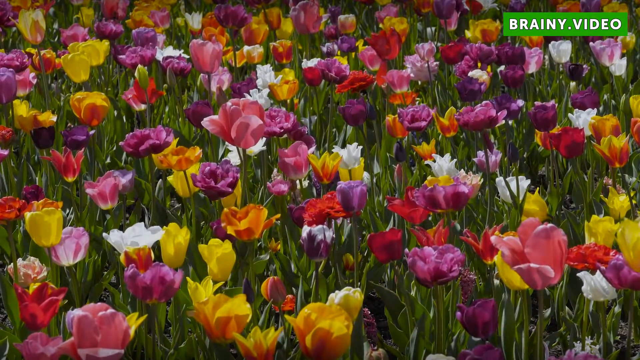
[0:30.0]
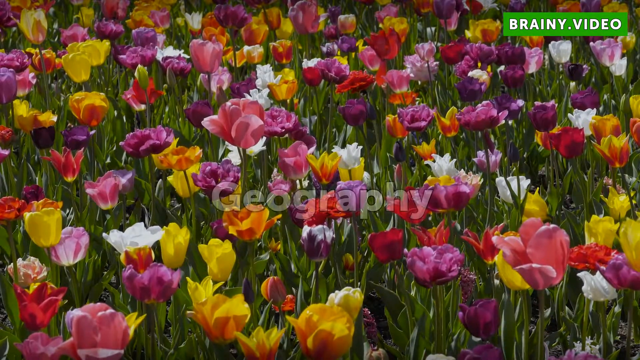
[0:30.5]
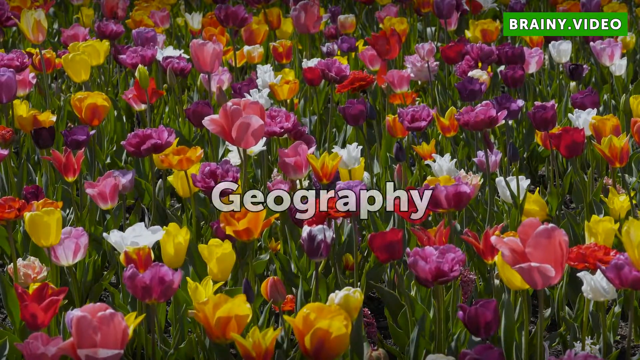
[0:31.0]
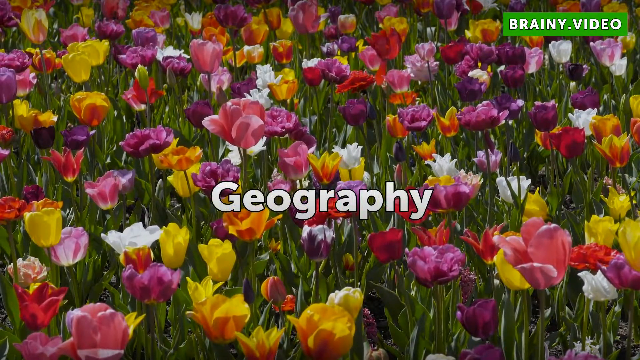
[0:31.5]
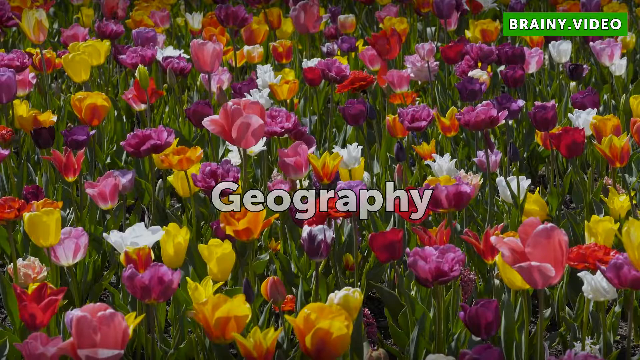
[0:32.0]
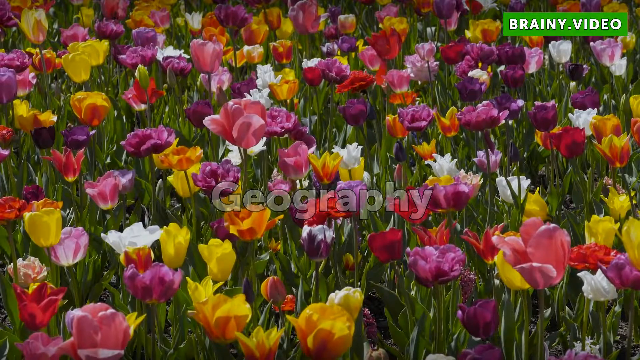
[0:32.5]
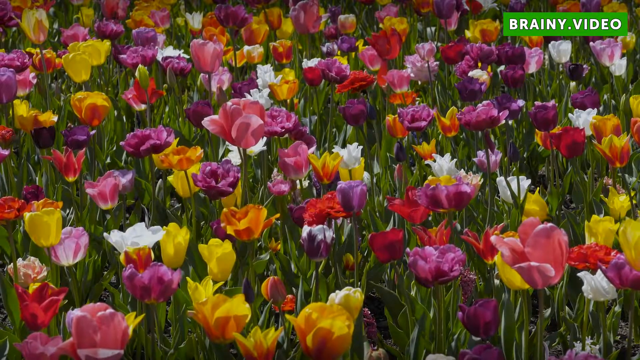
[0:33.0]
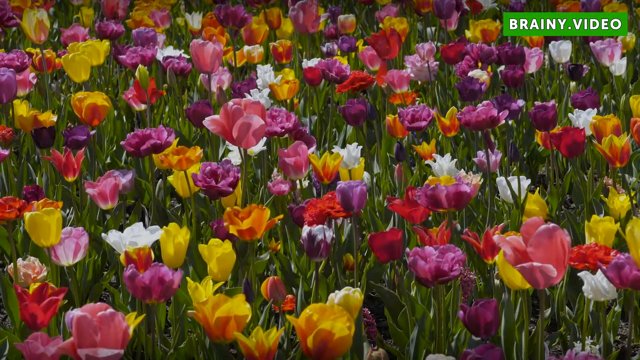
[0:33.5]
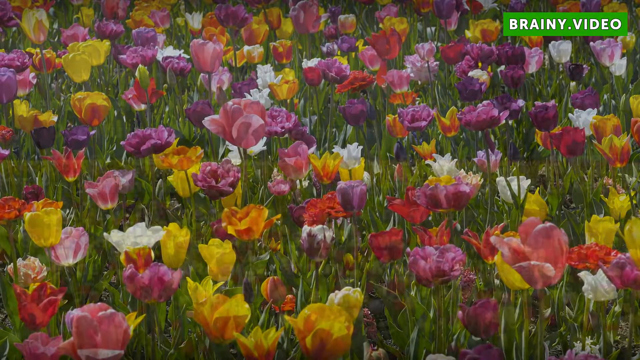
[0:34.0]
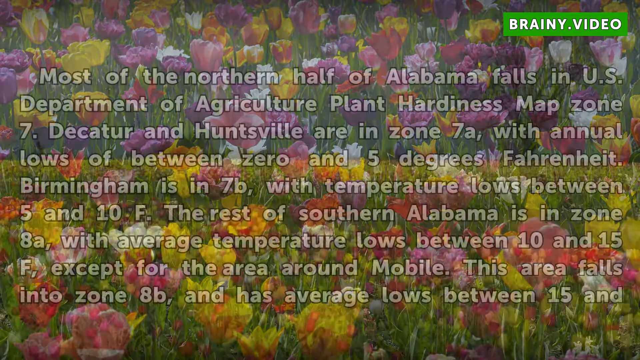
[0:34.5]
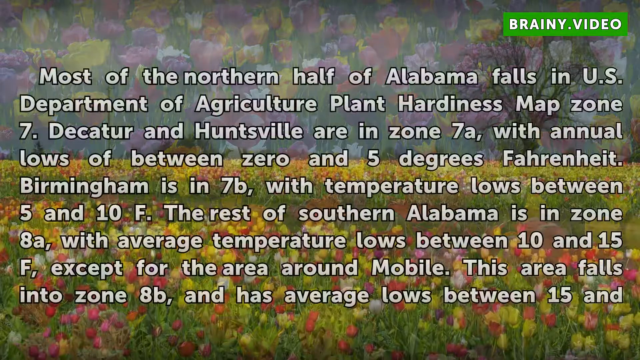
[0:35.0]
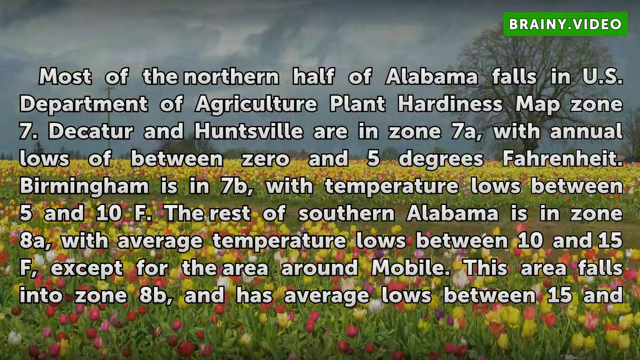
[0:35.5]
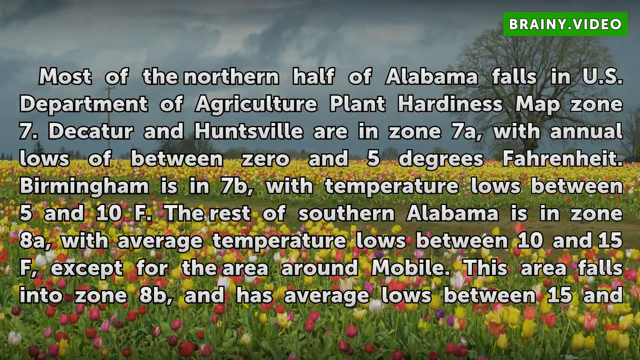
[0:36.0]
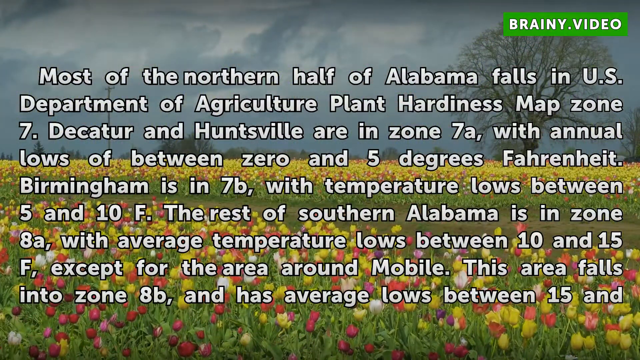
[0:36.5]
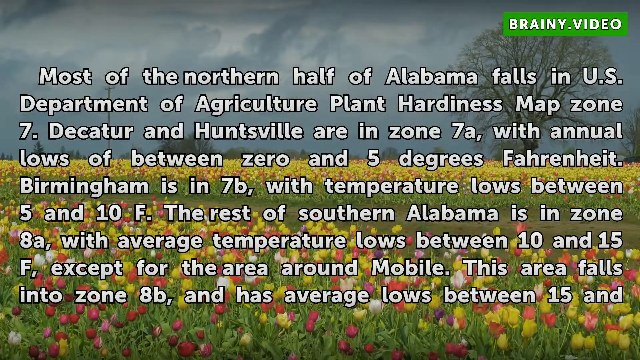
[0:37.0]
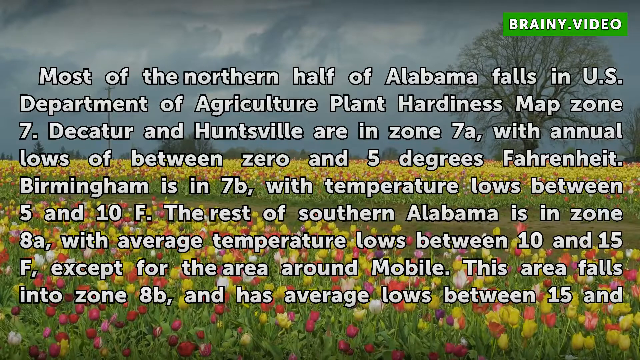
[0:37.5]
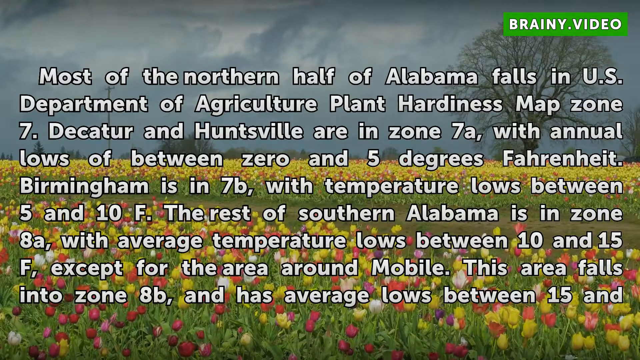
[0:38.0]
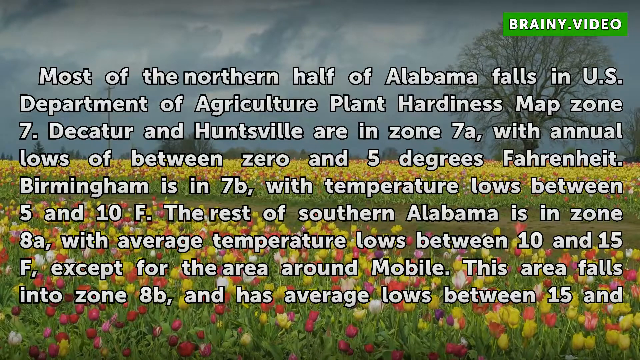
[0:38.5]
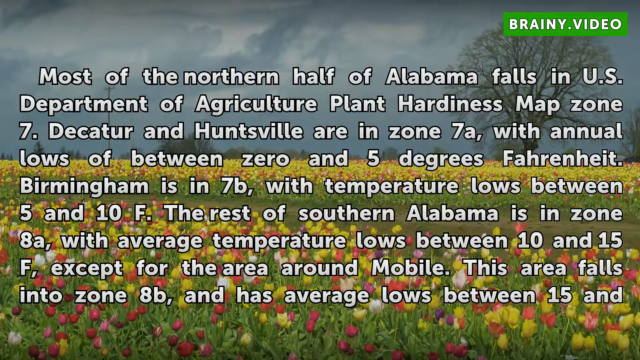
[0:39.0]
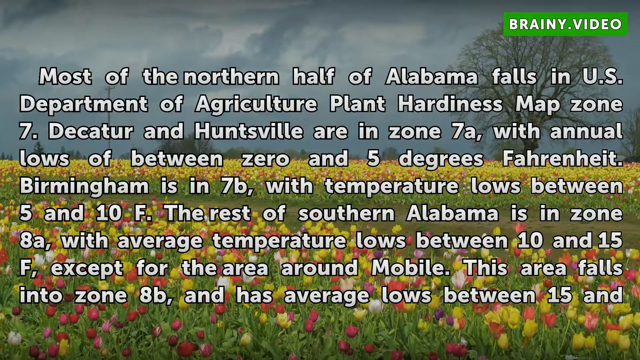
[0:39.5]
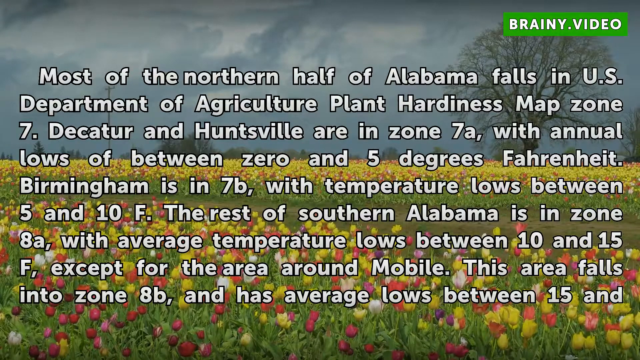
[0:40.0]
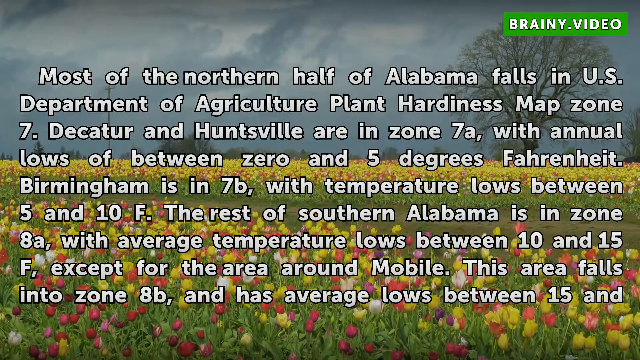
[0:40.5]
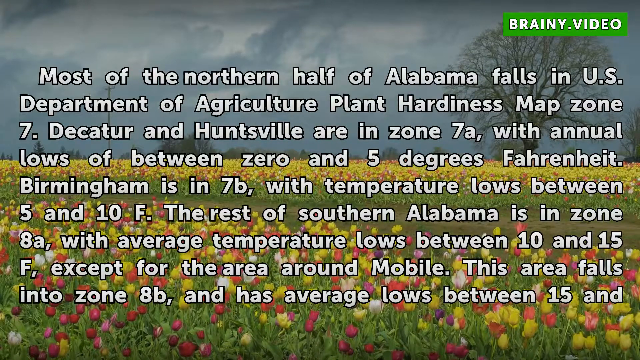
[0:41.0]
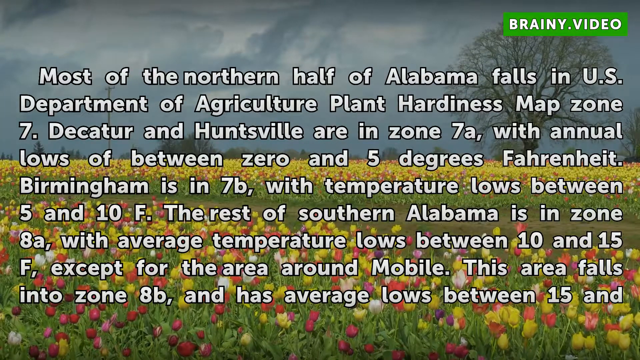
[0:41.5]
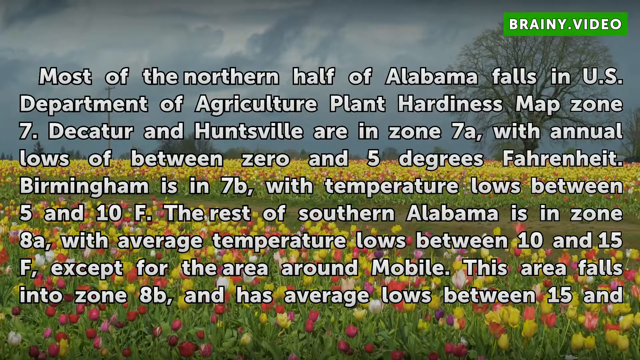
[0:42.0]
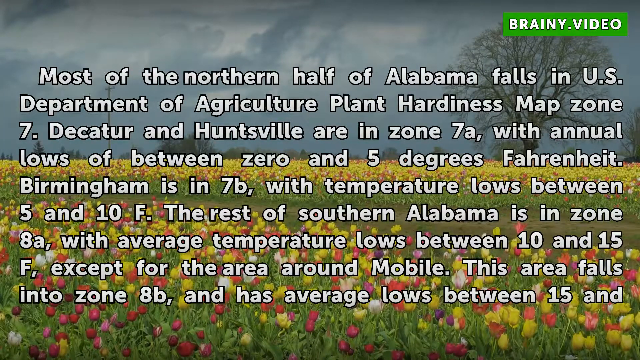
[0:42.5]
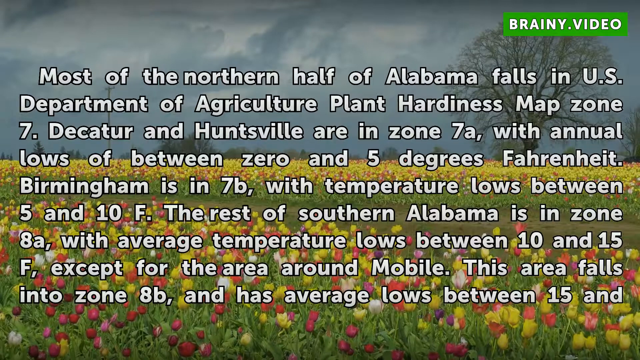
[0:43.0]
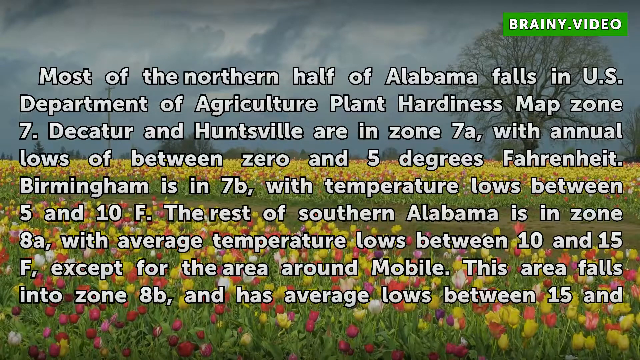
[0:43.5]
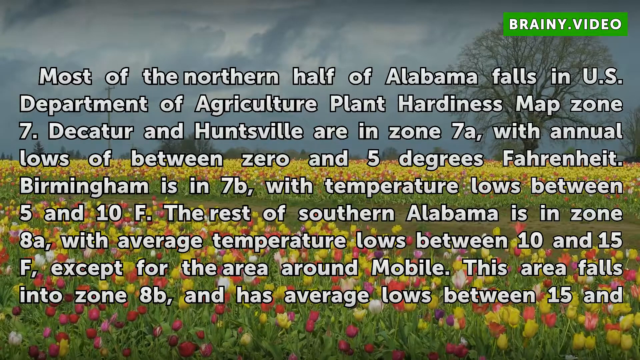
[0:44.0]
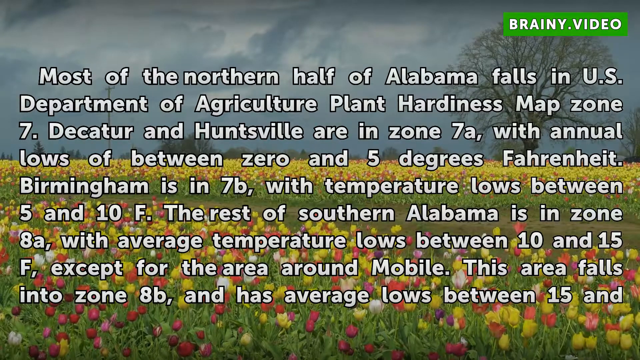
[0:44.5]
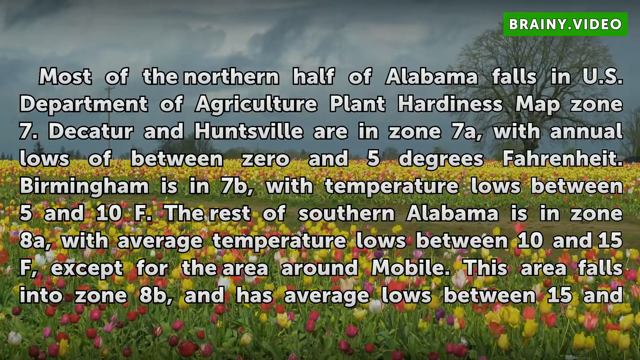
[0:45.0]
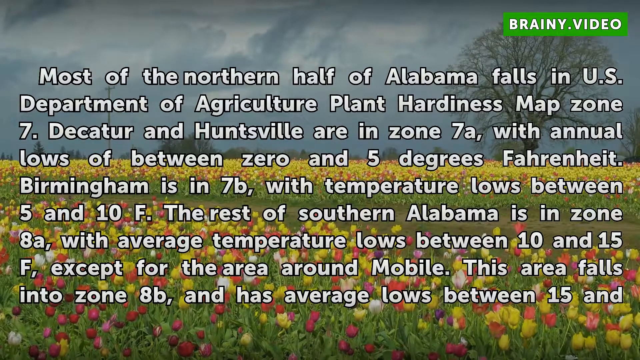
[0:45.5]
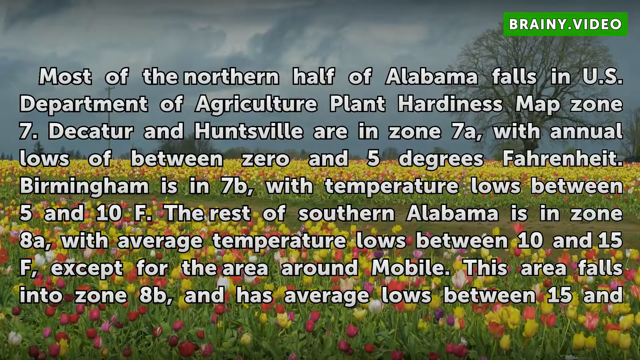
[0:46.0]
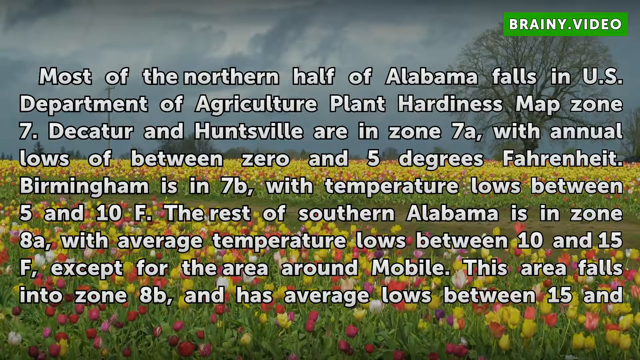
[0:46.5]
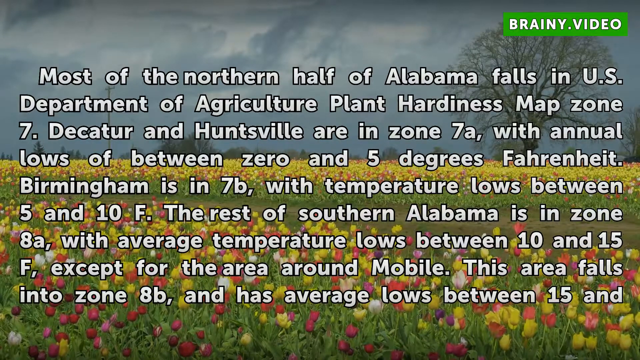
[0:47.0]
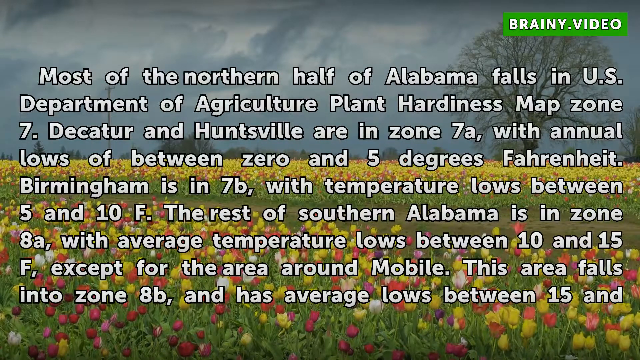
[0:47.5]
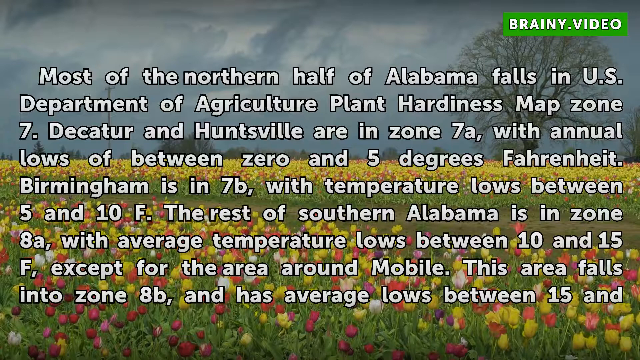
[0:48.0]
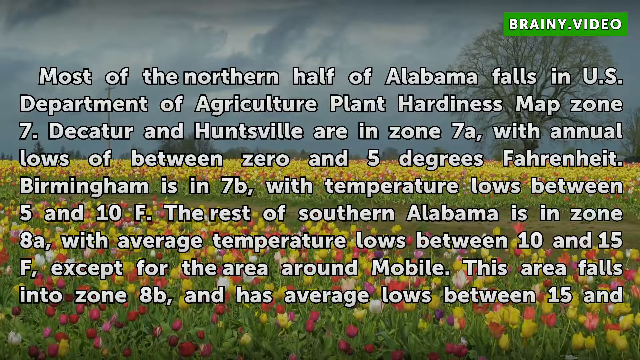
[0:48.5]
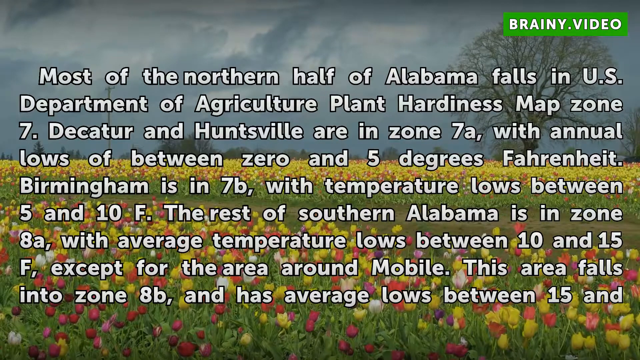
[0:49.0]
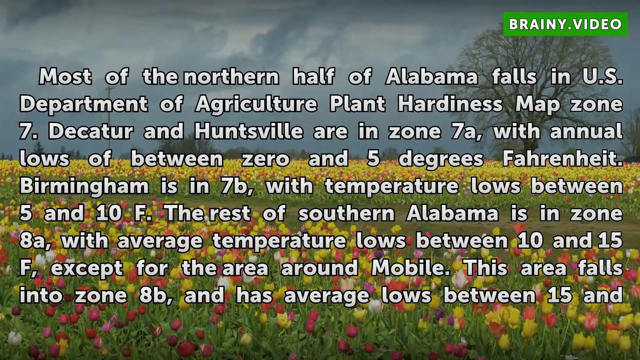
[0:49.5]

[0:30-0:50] The footage of the field of poppies in pink, red, orange, yellow, white and purple continues, and white text reading "Geography" appears in the centre of the screen. A new angle of the same field follows, now including the horizon, with a grey stormy sky in the top half of the screen and a leafless tree to the right. White text over this footage reads "most of the northern half of Alabama falls in U.S. Department of Agriculture Plant Hardiness Map Zone 7. Decatur and Huntsville are in Zone 7a with annual lows of between 0 and 5 degrees Fahrenheit. Birmingham is in Zone 7b with temperature lows between 5 and 10 degrees Fahrenheit. The rest of southern Alabama is in Zone 8a with average temperature lows between 10 and 15 degrees Fahrenheit, except for the area around Mobile. This area falls into Zone 8b and has average lows between 15 and", where the text ends.